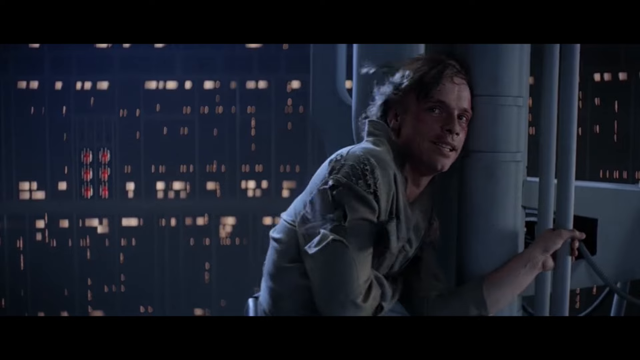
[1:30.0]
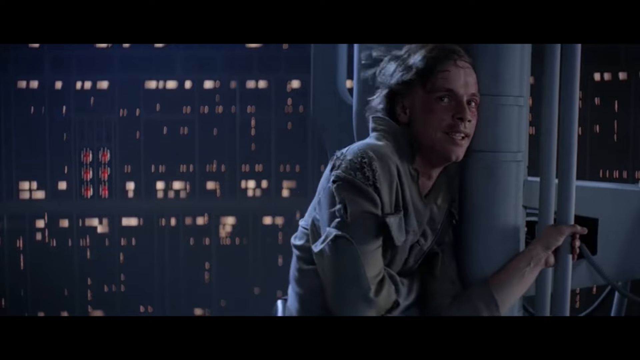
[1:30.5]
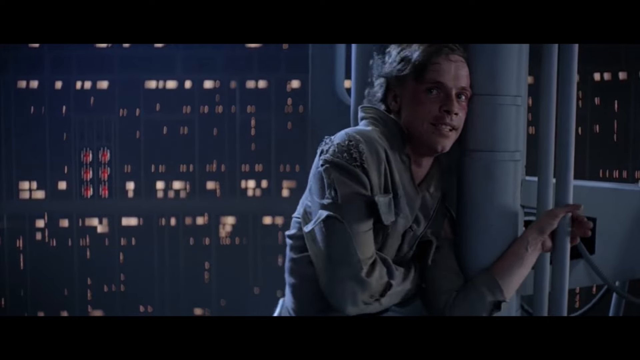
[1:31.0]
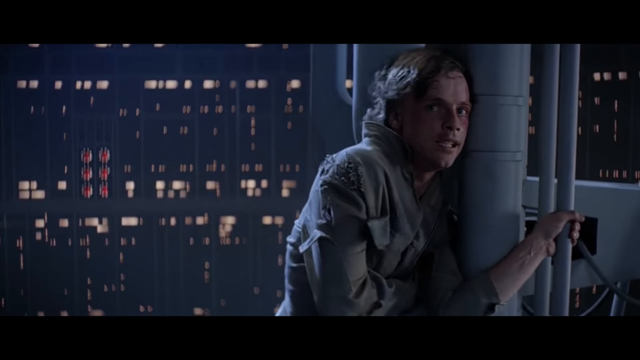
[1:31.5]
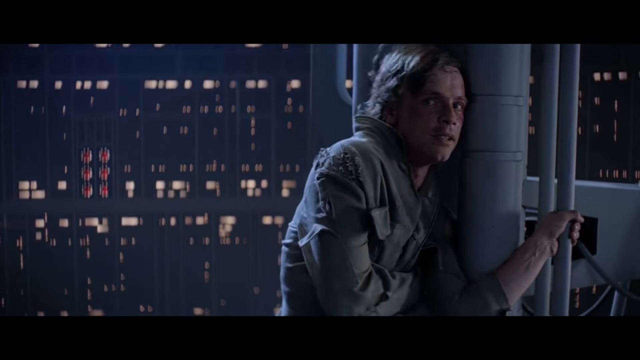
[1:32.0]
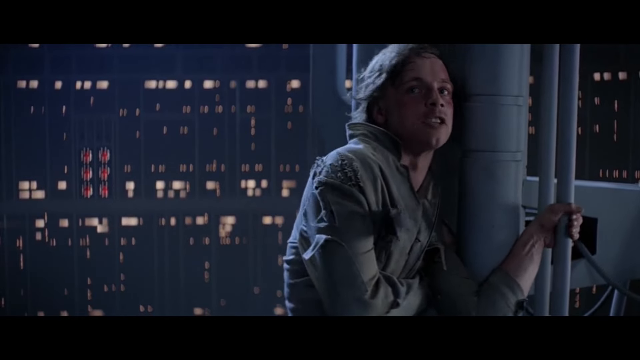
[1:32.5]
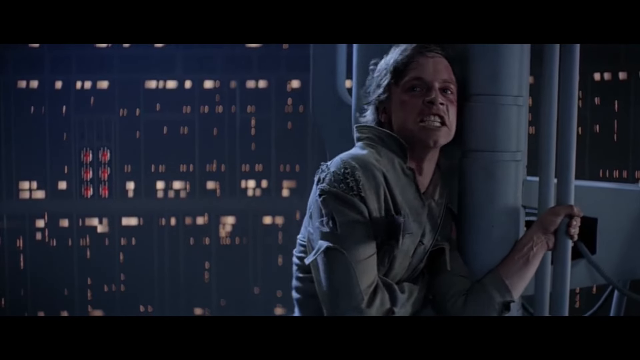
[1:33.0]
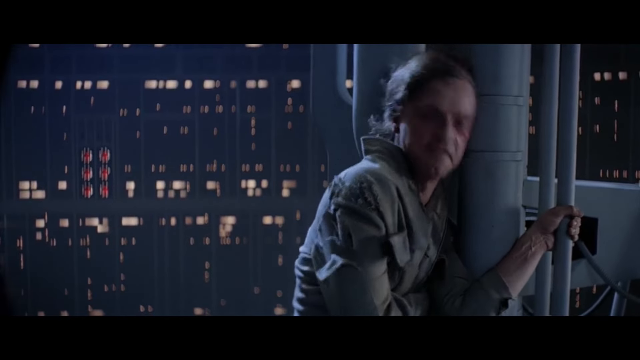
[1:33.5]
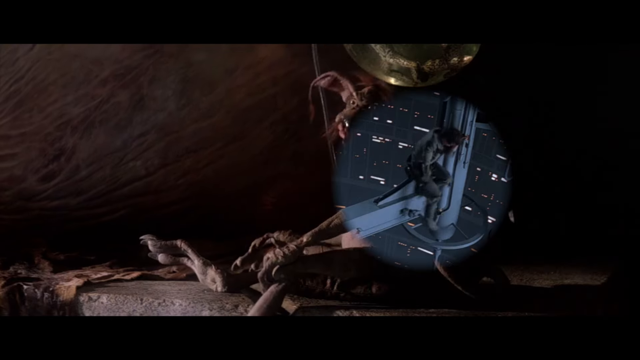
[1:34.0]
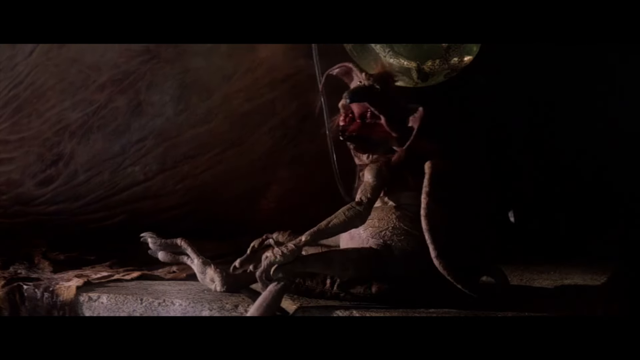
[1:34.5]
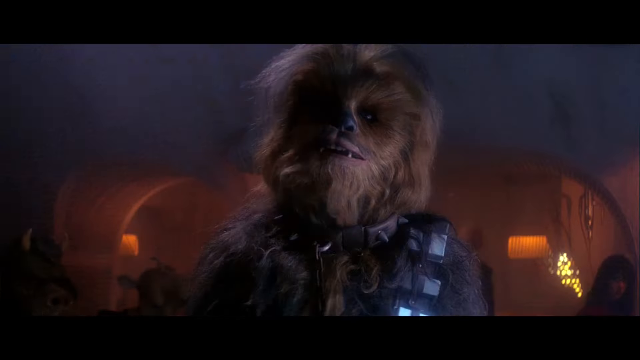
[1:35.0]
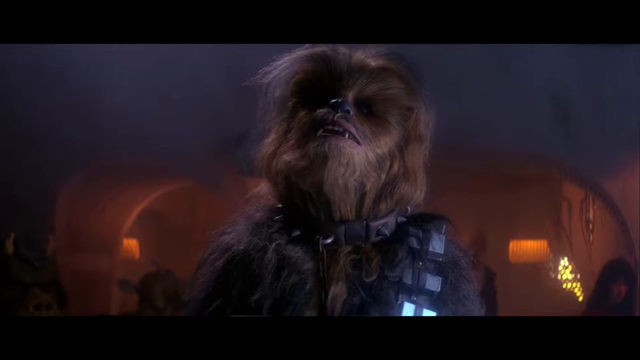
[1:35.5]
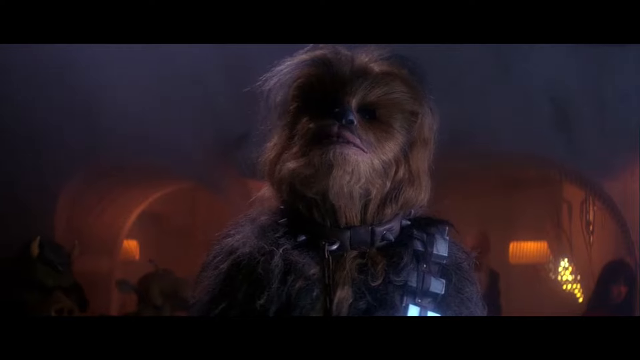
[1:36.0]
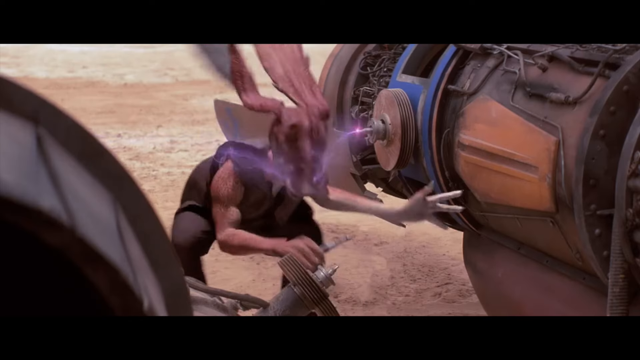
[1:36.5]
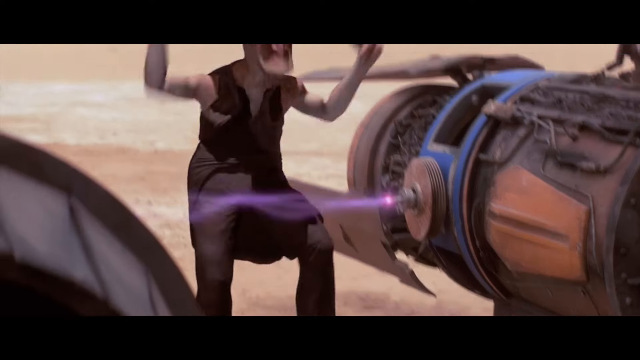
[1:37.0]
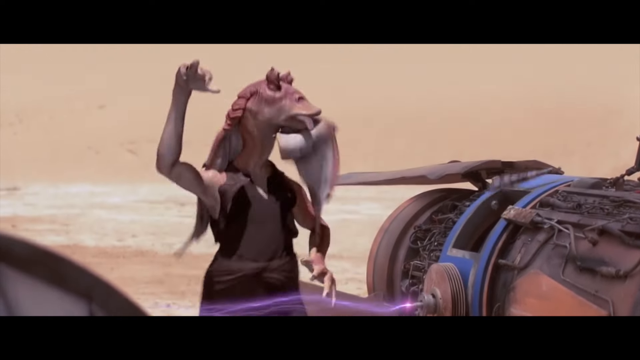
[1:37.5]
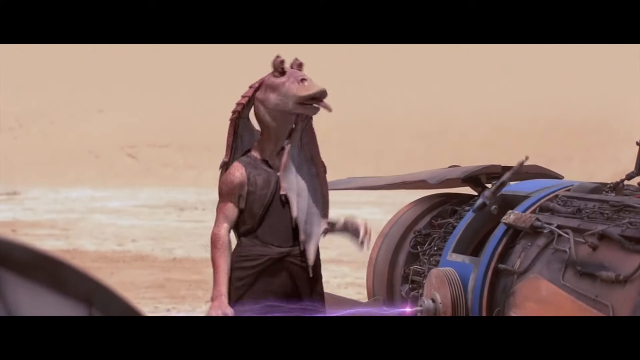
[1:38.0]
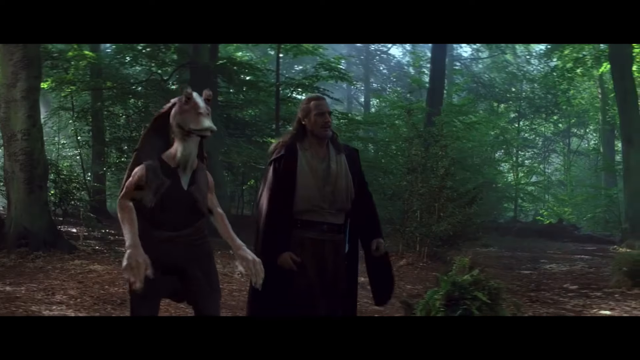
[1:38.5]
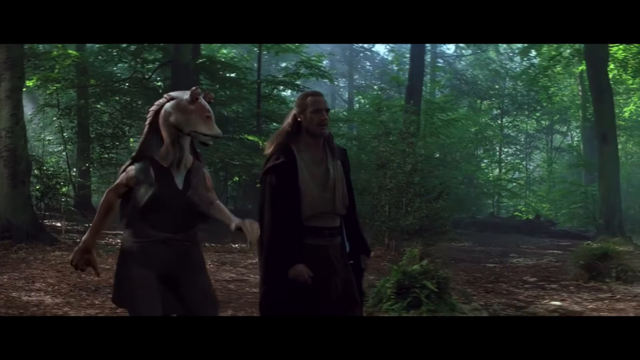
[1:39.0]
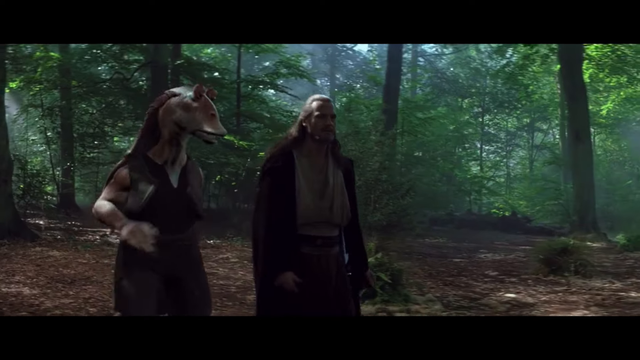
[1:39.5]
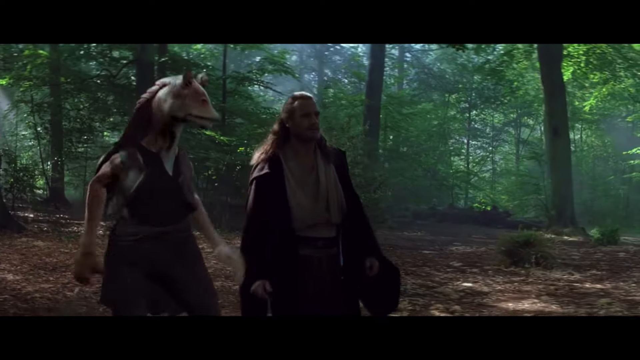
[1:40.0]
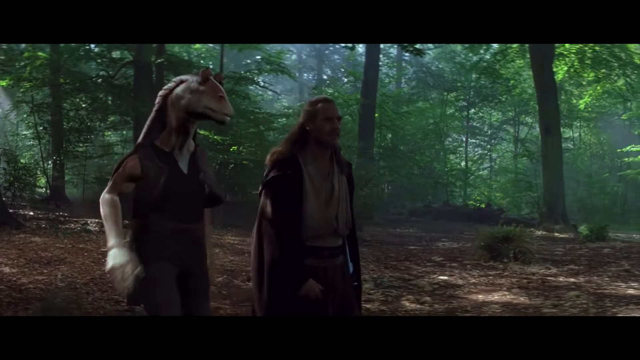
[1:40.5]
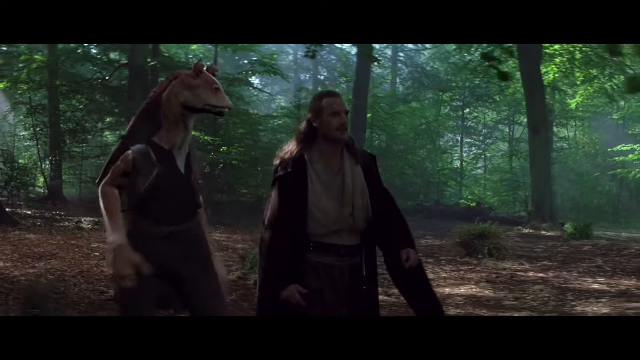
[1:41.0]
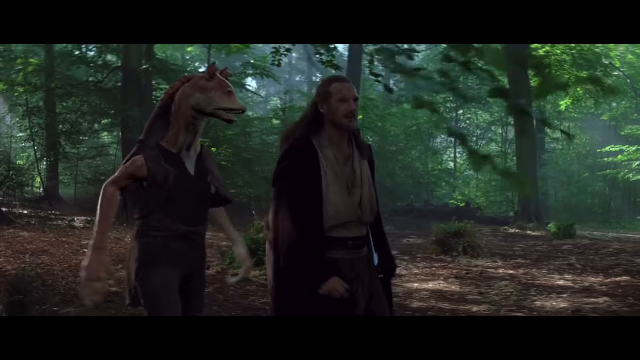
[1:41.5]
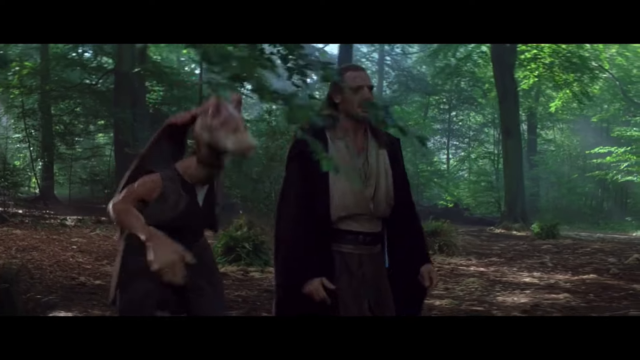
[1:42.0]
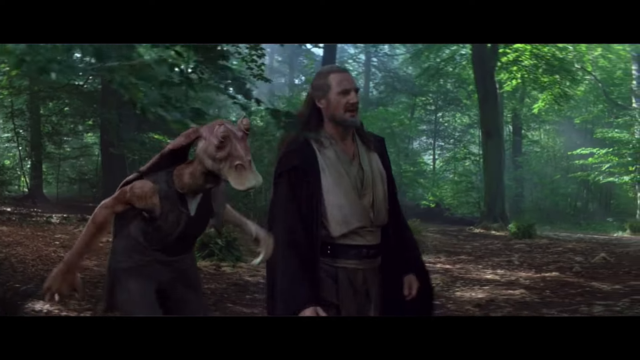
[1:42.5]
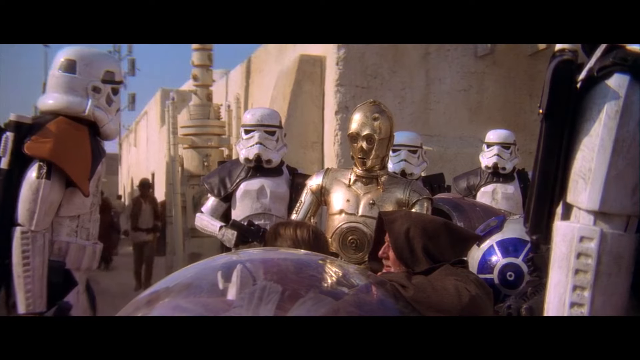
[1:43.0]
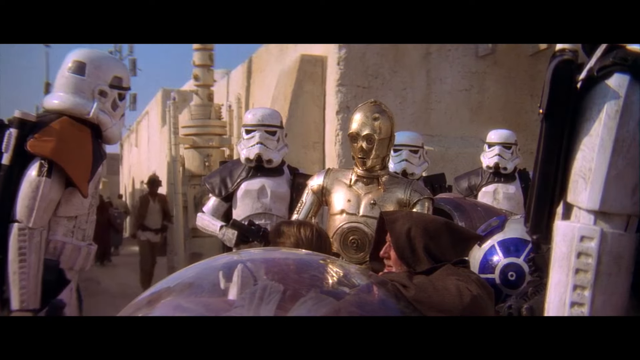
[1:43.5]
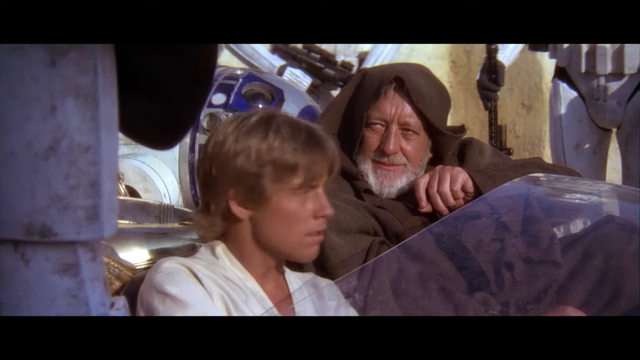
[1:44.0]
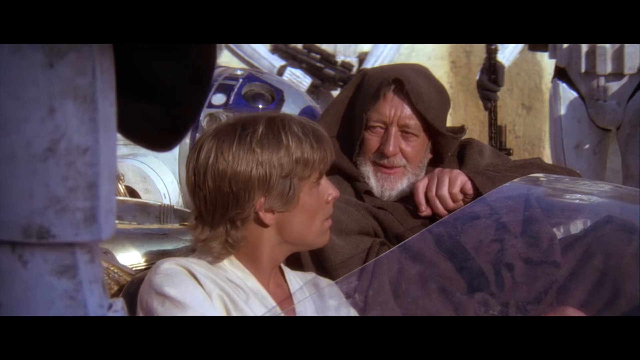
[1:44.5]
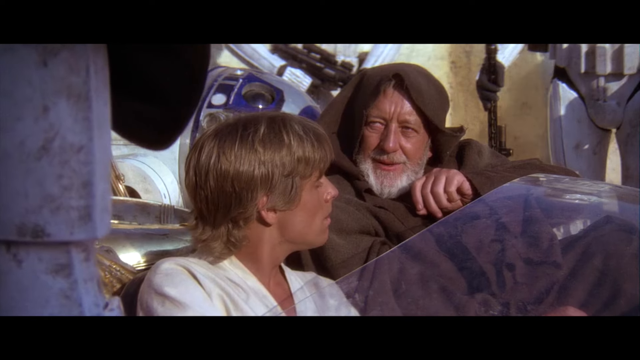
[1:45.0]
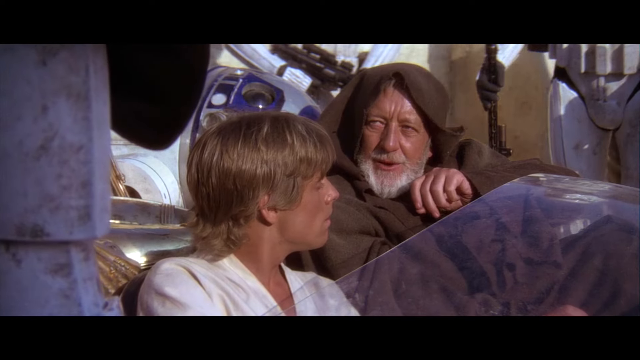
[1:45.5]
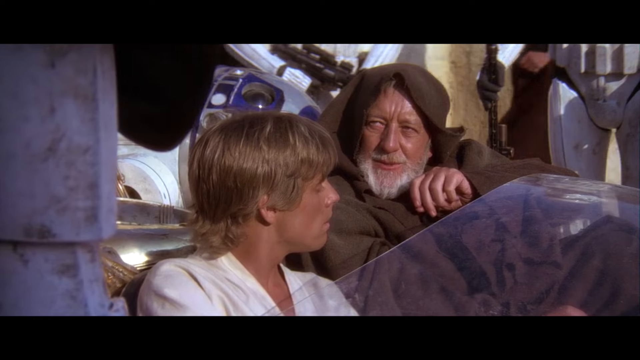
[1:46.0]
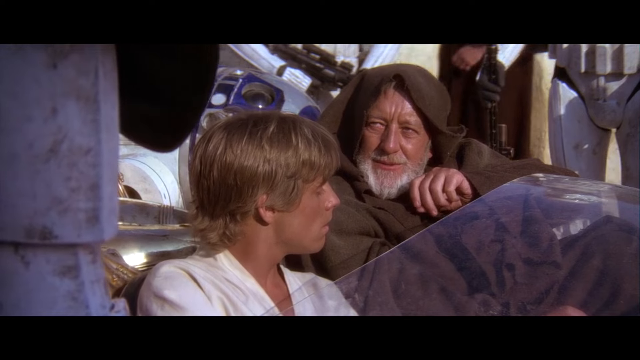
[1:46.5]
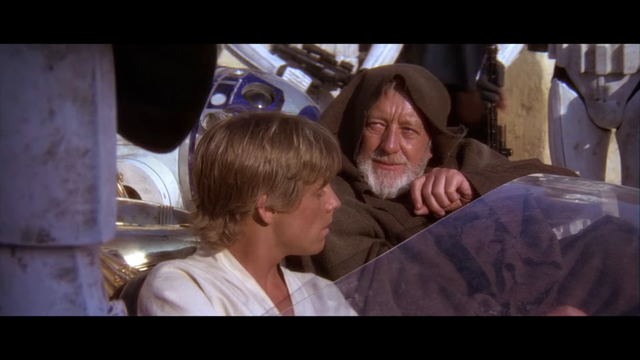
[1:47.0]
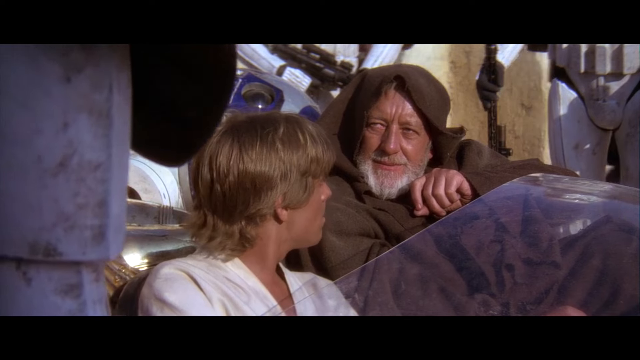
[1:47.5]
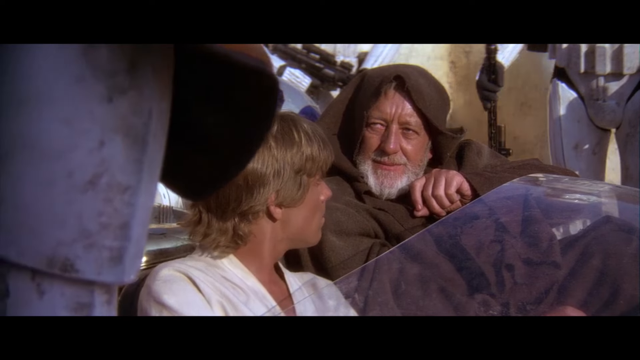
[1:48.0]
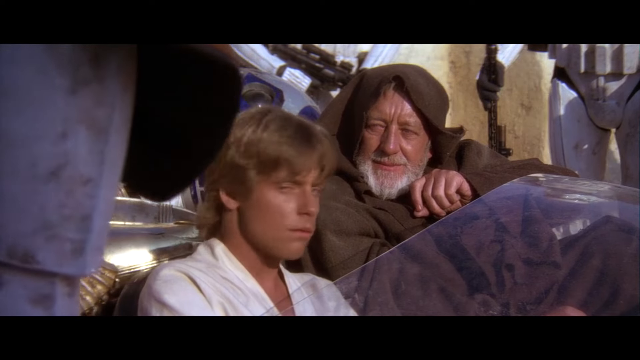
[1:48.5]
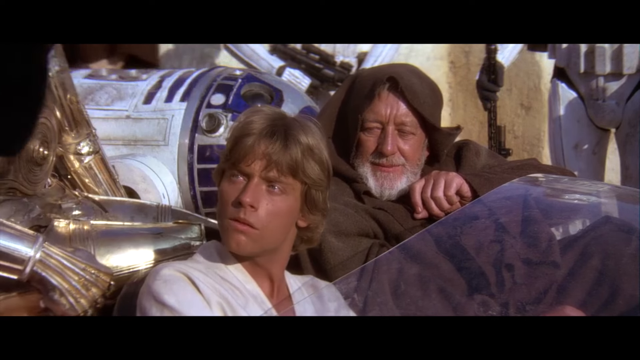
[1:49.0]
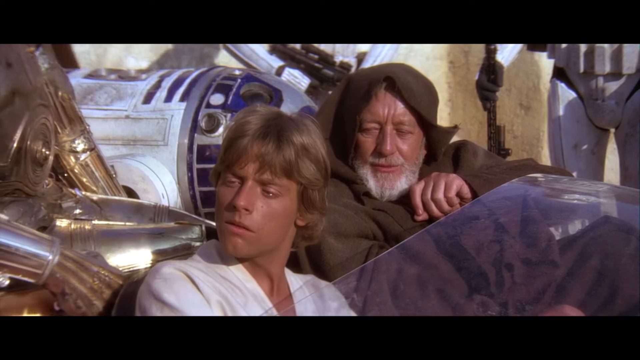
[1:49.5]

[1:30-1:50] Someone talks to a red fish-looking character with red eyes and a red mouth; they seem to be hidden somewhere. One of the Star Wars characters is in a battle with an unidentified opponent. Many Star Wars characters appear, including a Jedi and sabers, with many of them in the background, apparently on a mission somewhere. The scenes are disconnected cutouts from Star Wars. Another character walks with a man in a forest.